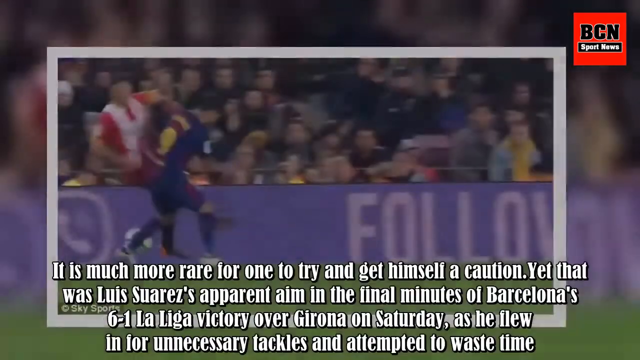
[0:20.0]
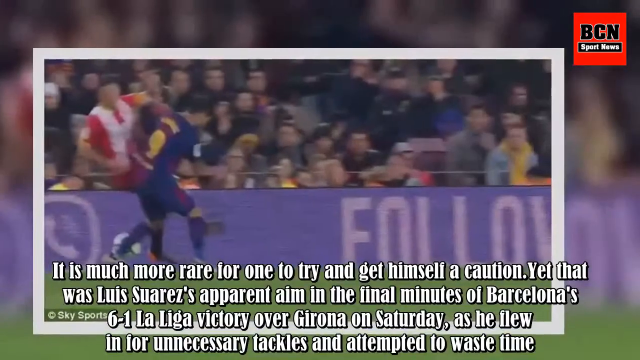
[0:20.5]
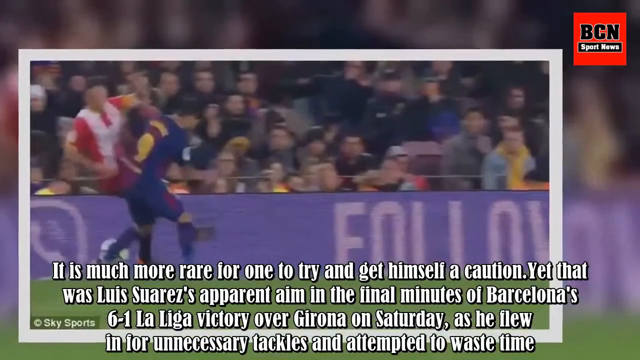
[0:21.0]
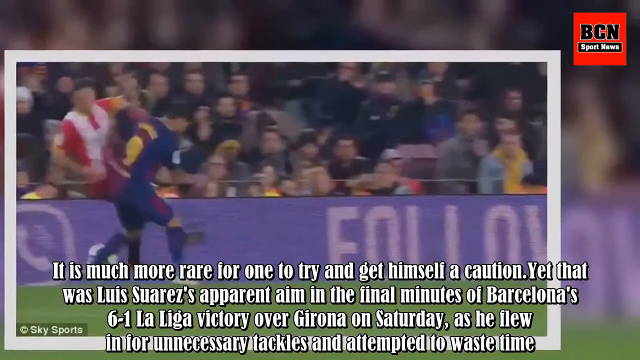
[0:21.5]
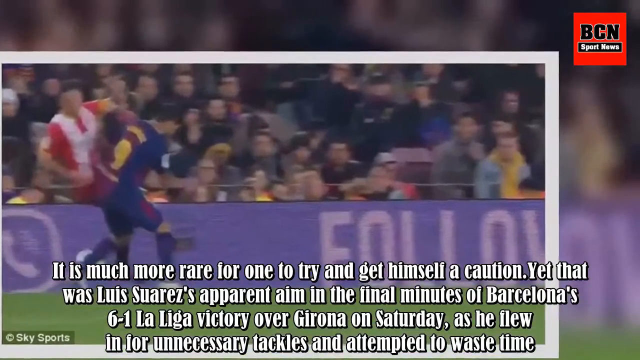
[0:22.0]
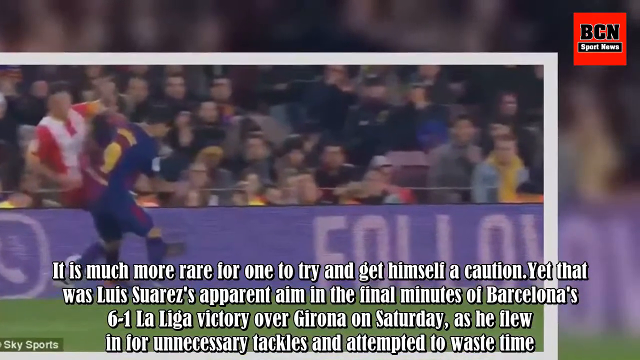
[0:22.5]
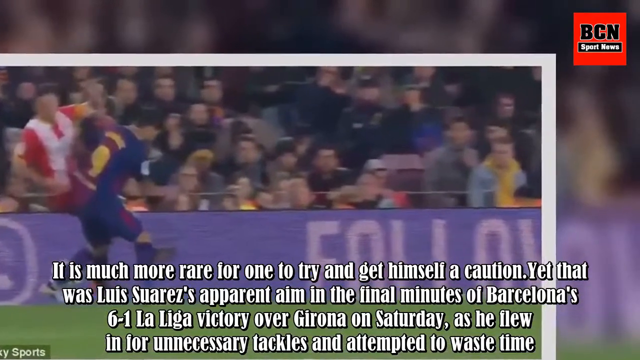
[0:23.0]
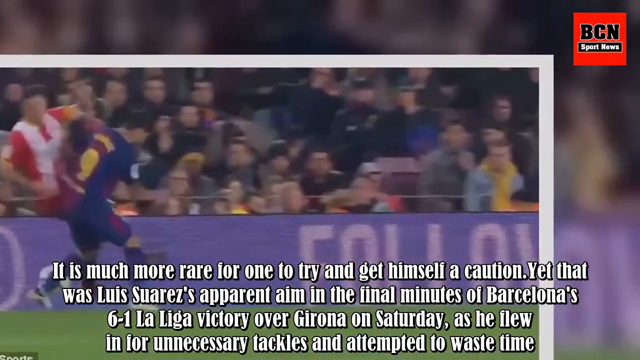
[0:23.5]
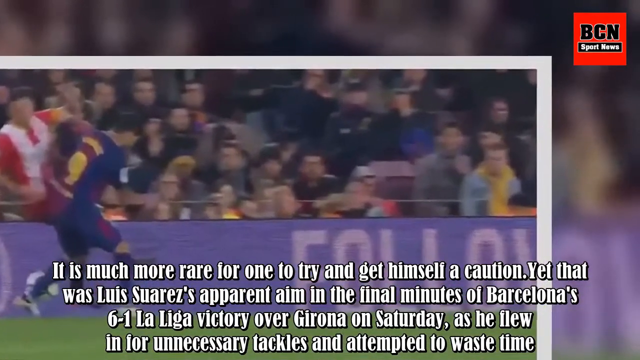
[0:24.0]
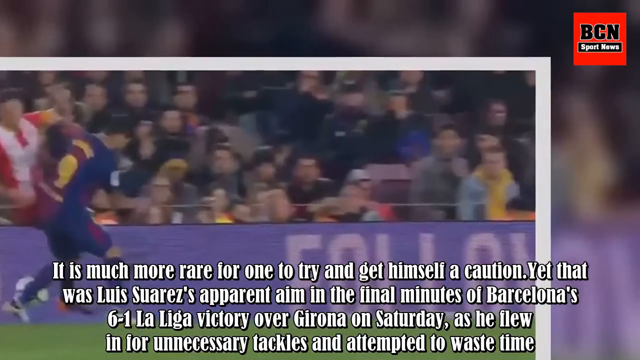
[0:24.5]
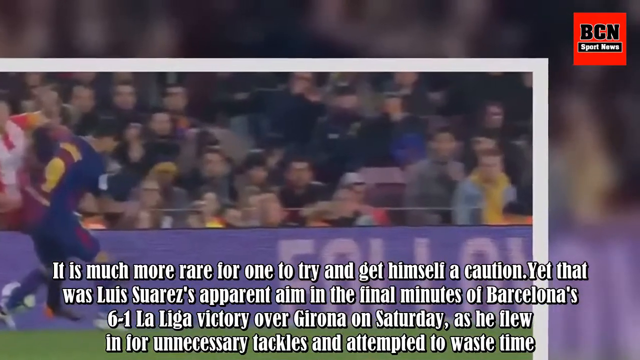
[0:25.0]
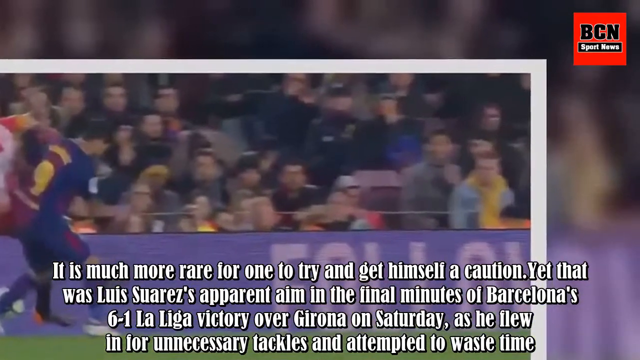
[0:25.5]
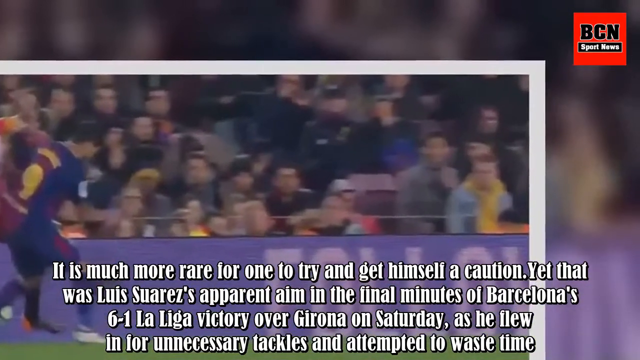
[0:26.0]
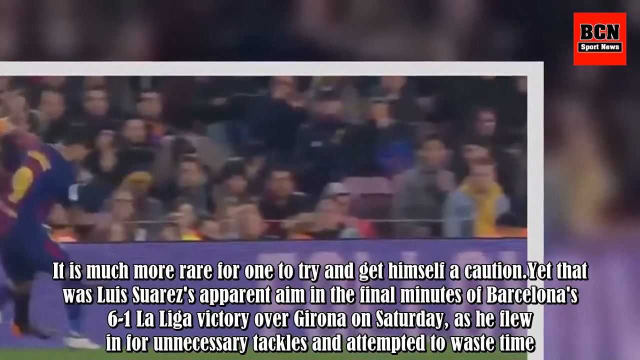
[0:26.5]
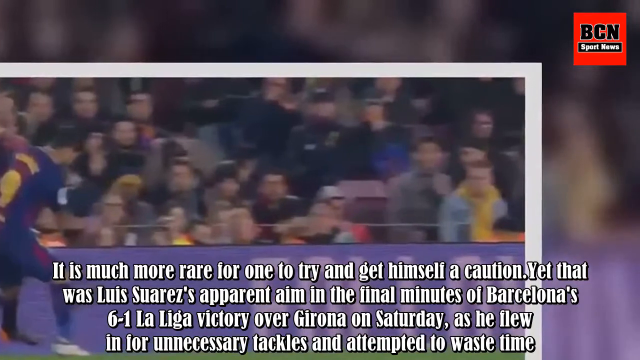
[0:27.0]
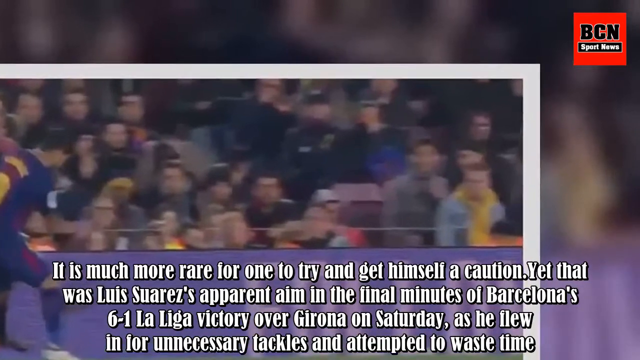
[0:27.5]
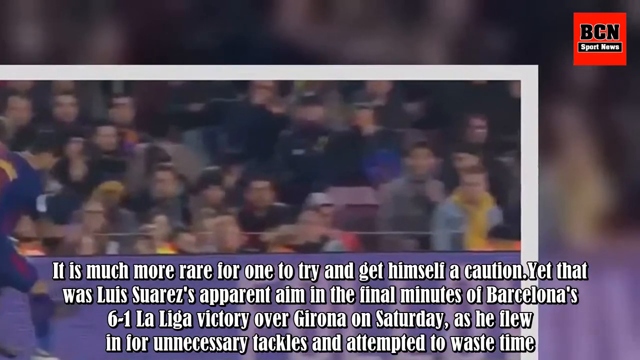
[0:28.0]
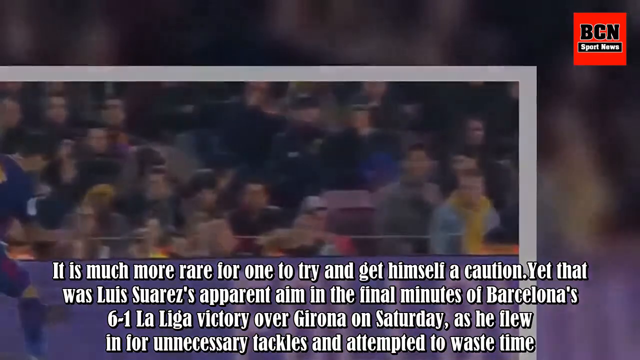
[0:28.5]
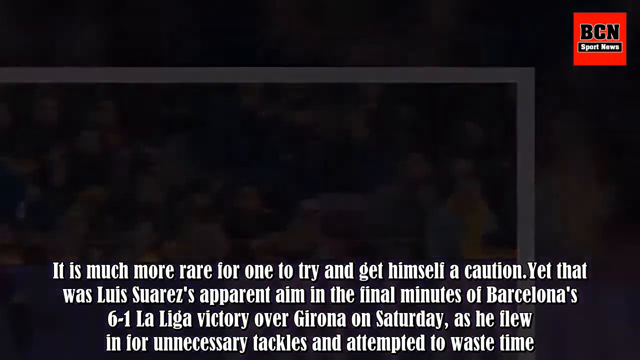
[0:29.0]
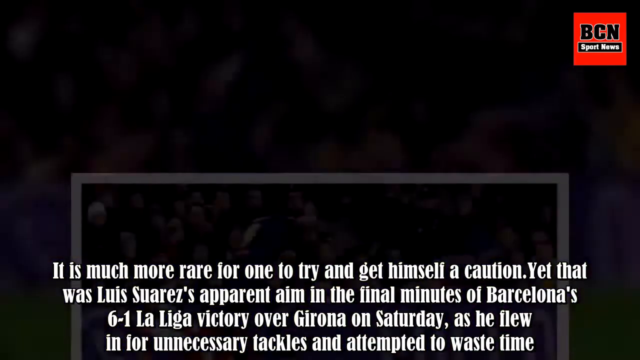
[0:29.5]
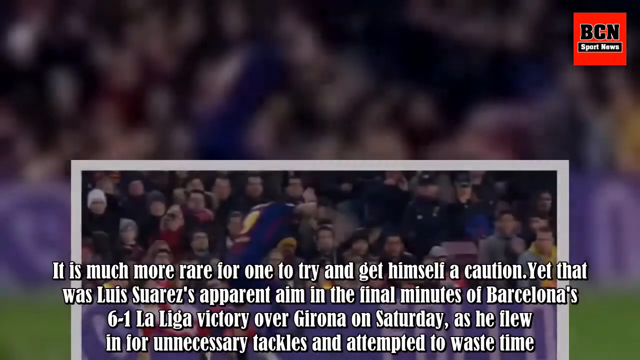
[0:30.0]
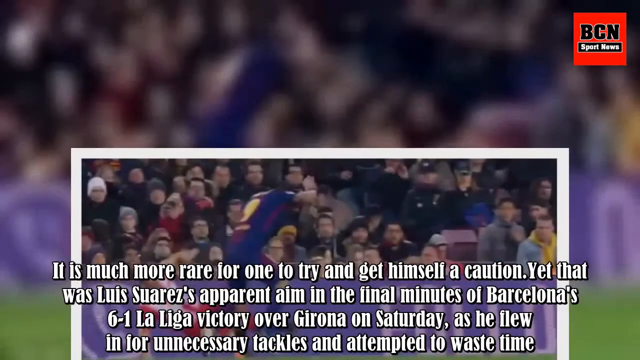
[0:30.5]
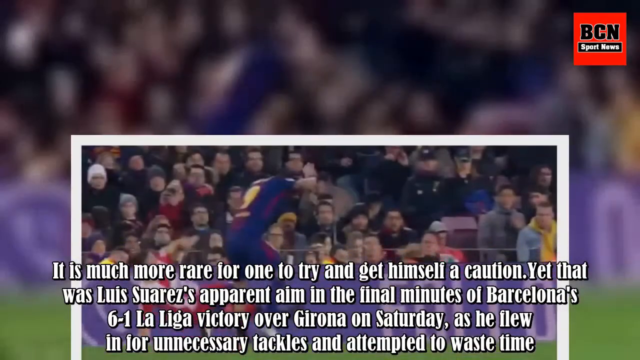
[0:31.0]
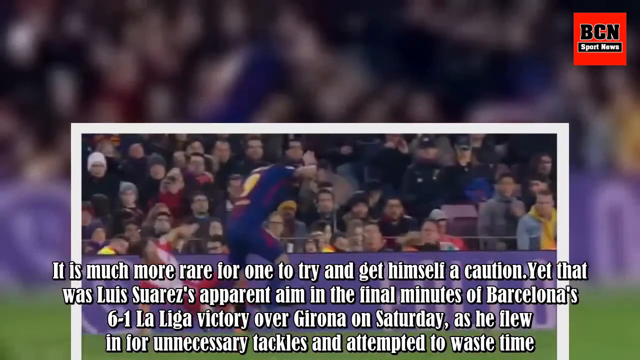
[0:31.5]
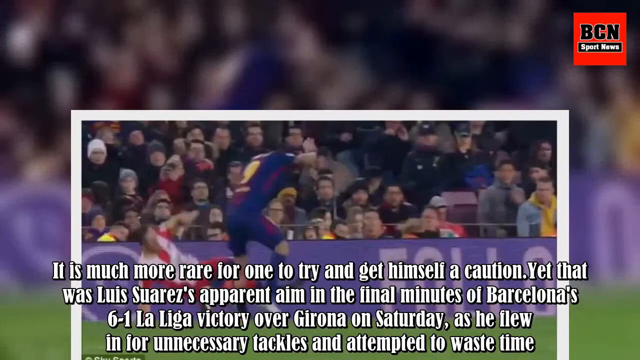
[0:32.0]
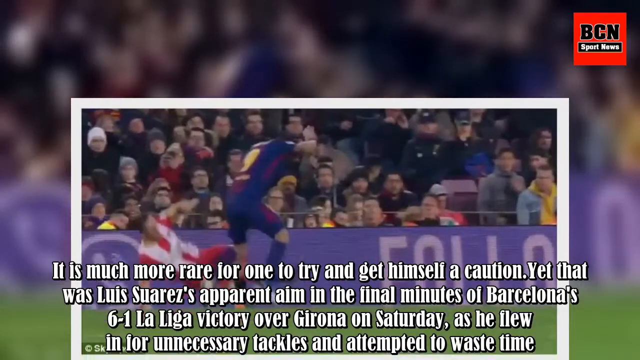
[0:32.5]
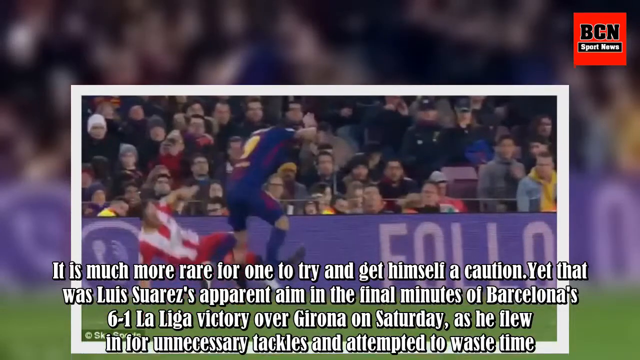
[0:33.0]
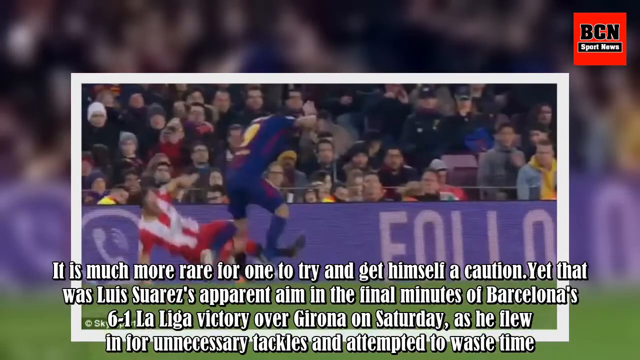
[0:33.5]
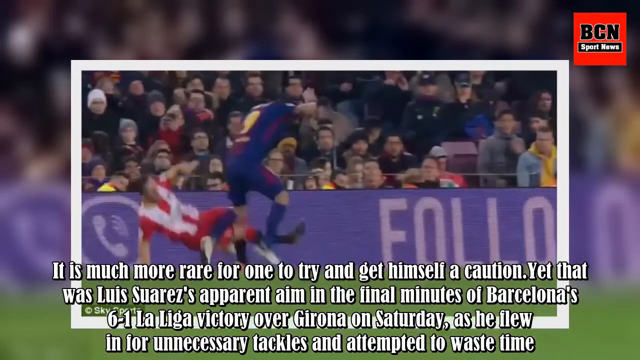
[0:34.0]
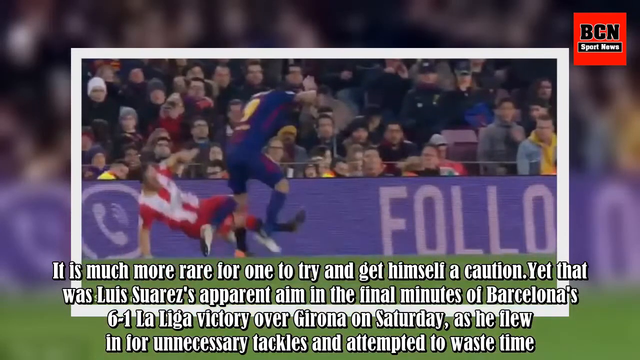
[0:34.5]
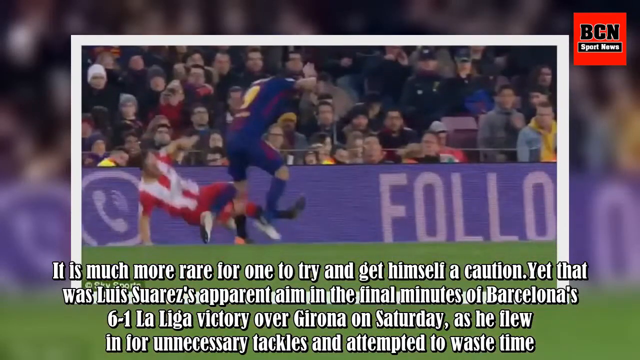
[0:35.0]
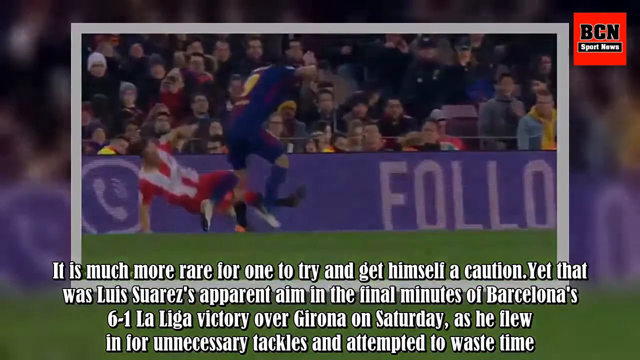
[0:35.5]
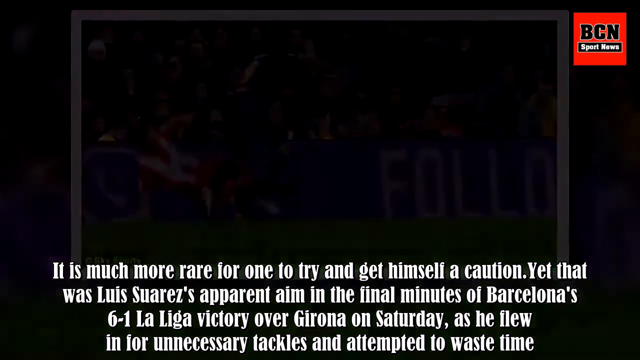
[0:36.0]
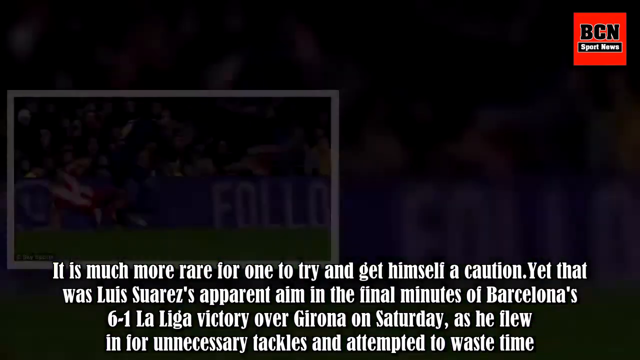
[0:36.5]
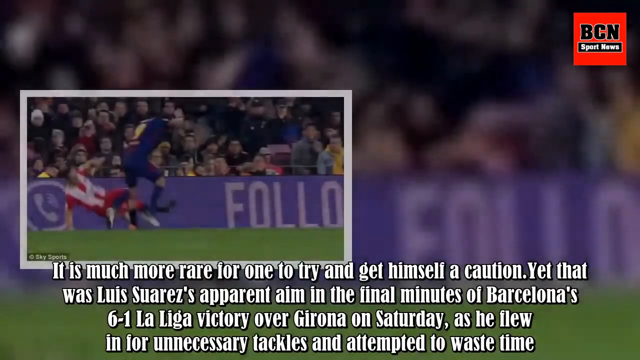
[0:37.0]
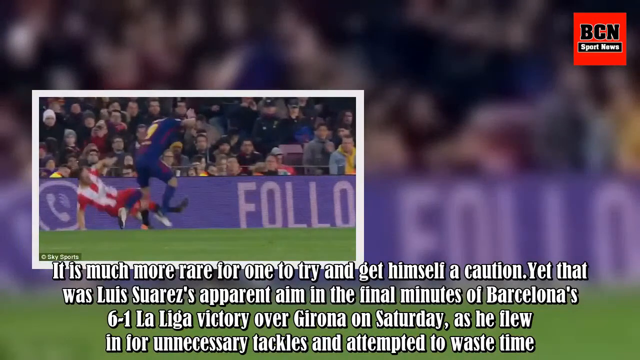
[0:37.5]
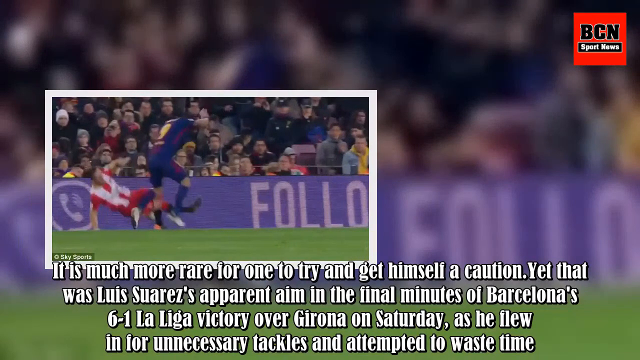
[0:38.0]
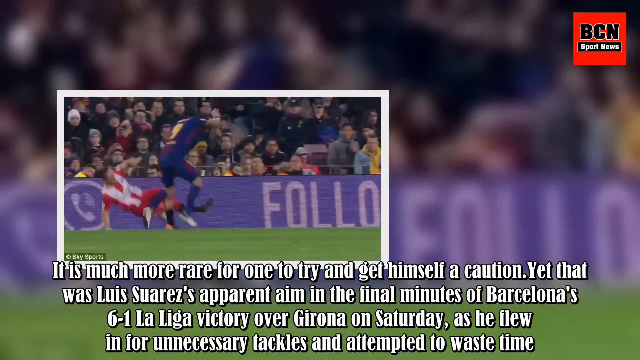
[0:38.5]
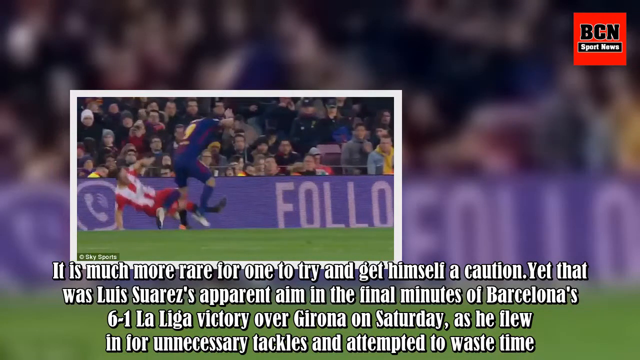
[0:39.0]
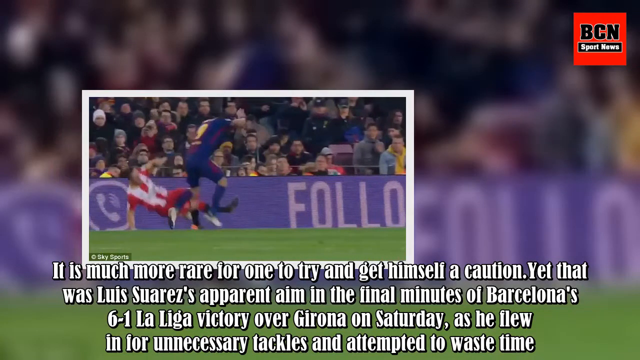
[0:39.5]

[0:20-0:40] A picture of a soccer game shows two players almost looking like they are colliding, with a soccer ball between their legs. It is a live sporting event, with an audience behind them and spectators in the crowd. In the right corner, "BCN Sports News" appears in a red box. Text reads "it was much more rare for one to try and get himself a caution yet that was Luis Suarez's apparent aim in the final minutes of Barcelona's 6-1 La Liga victory over Giora on Saturday as he flew in for unnecessary tackles and attempted to waste time." Different images and pictures from the game follow, showing two men tripping over each other, and the same picture of one man falling over another man keeps being shown.